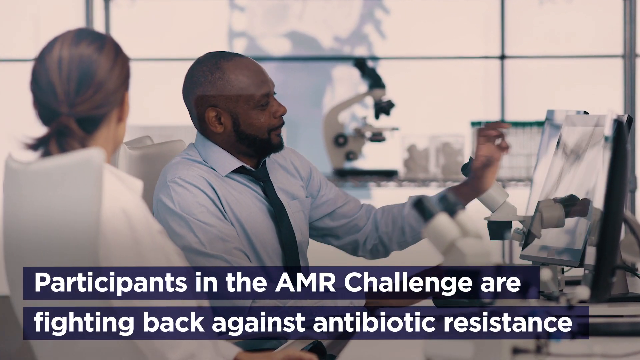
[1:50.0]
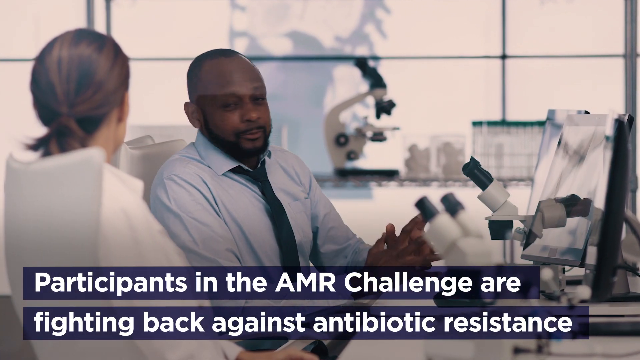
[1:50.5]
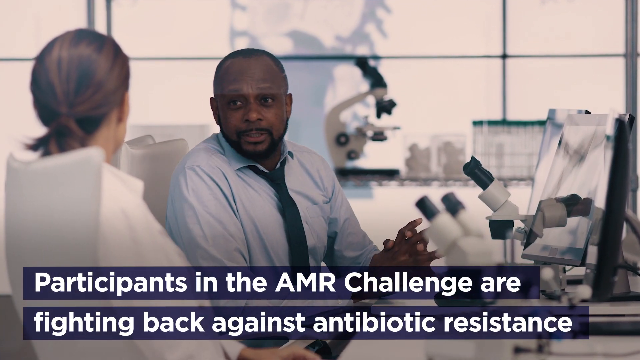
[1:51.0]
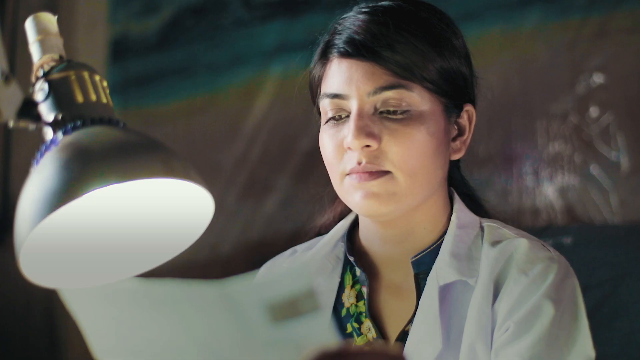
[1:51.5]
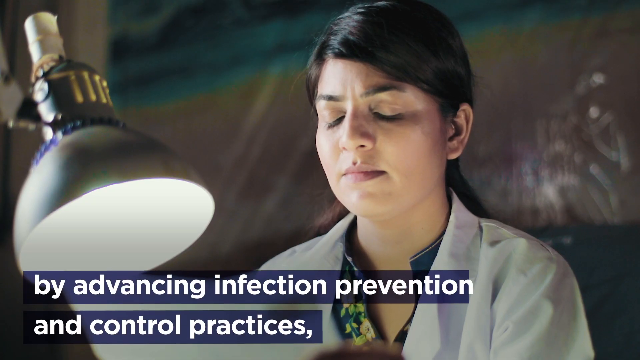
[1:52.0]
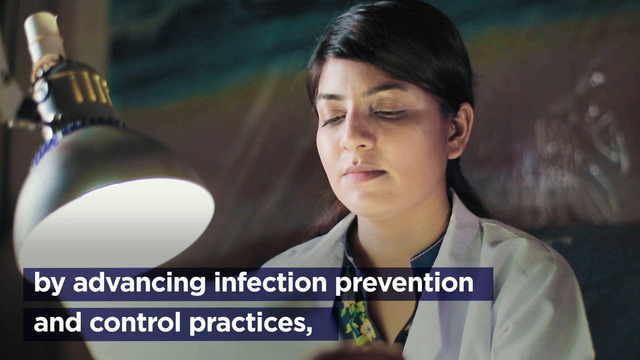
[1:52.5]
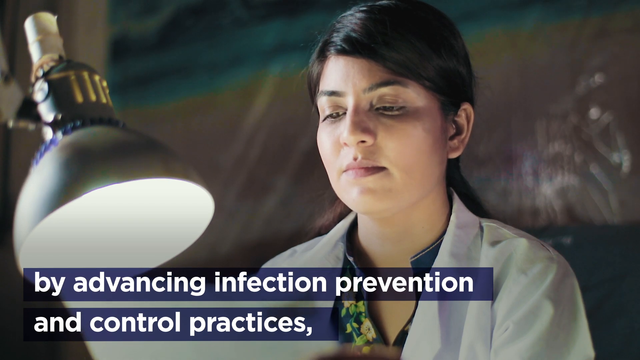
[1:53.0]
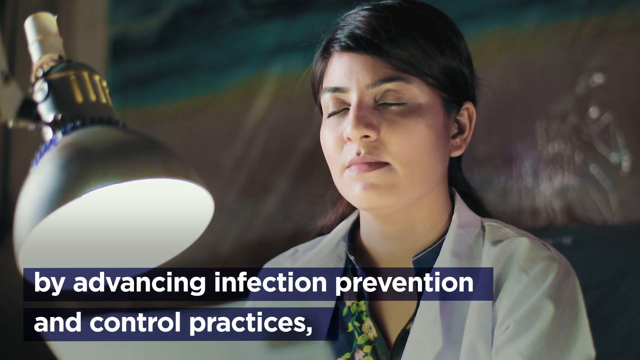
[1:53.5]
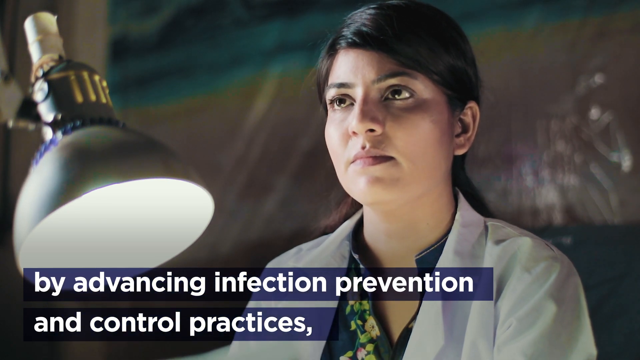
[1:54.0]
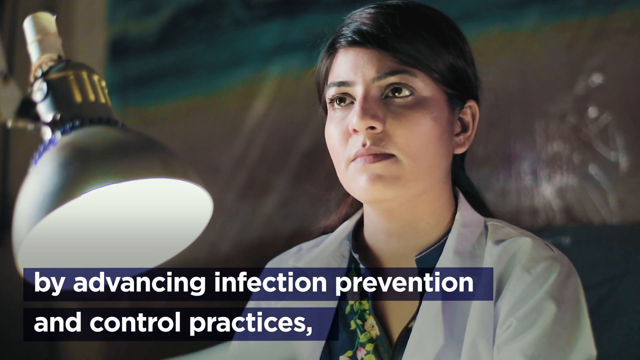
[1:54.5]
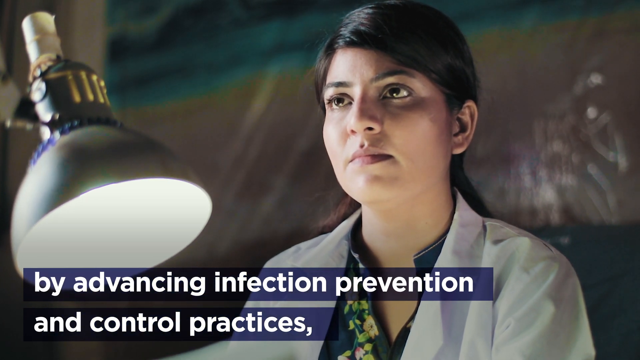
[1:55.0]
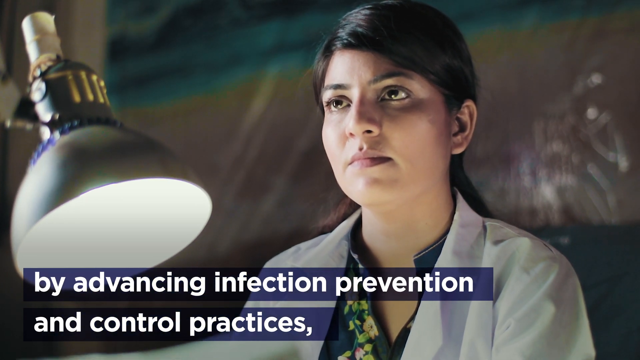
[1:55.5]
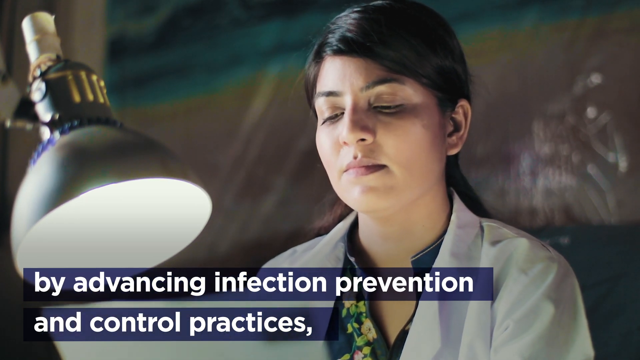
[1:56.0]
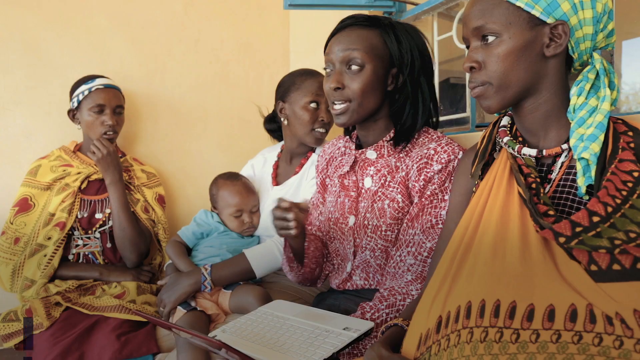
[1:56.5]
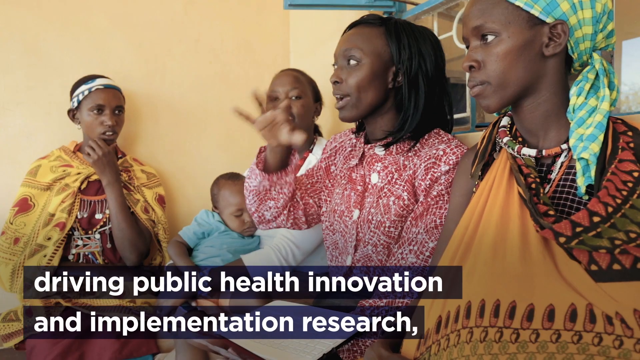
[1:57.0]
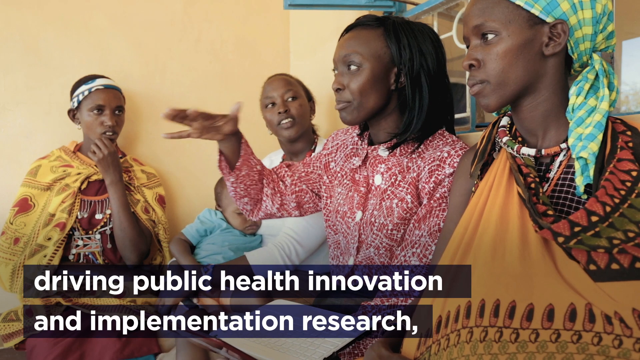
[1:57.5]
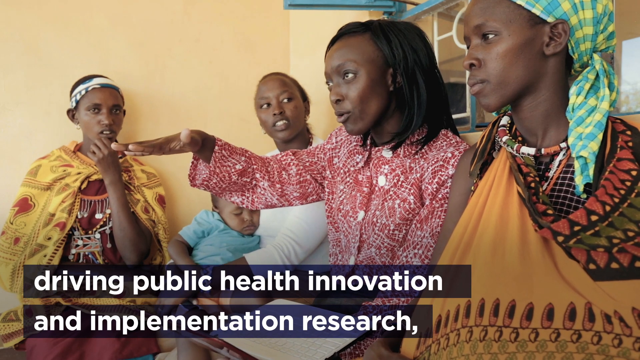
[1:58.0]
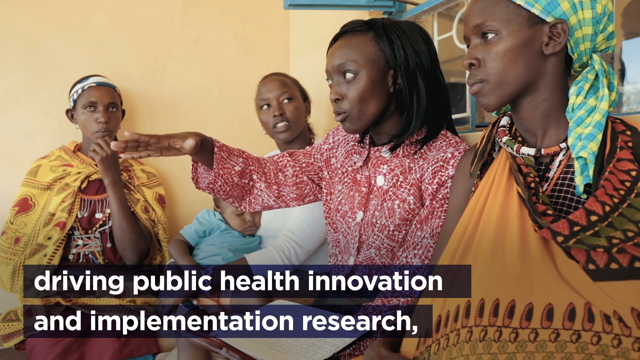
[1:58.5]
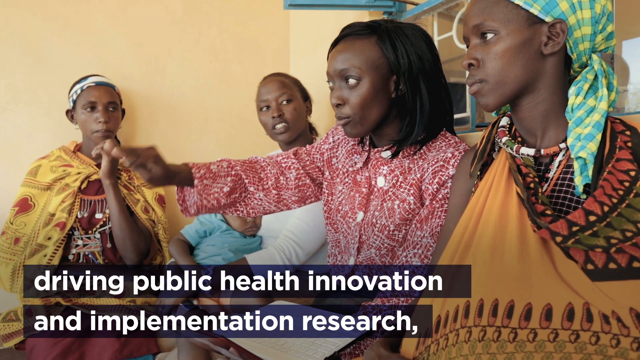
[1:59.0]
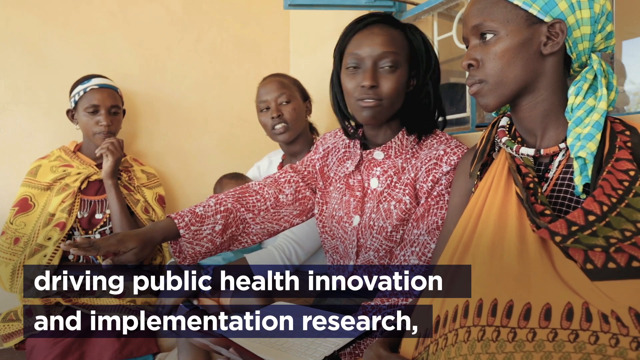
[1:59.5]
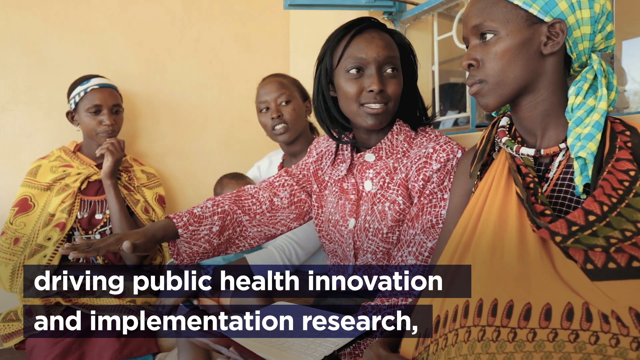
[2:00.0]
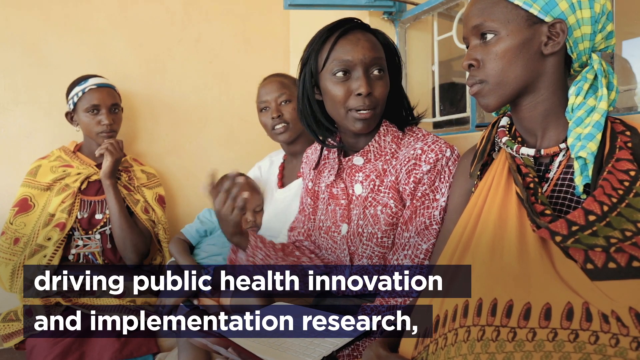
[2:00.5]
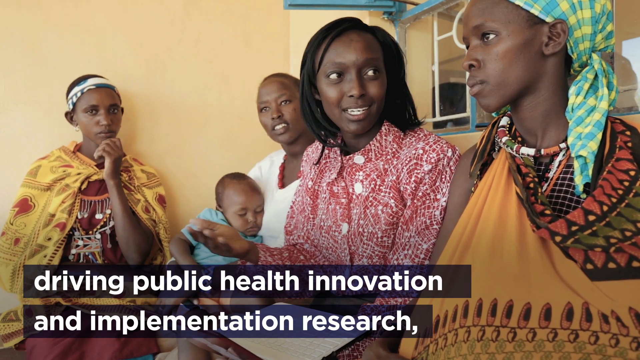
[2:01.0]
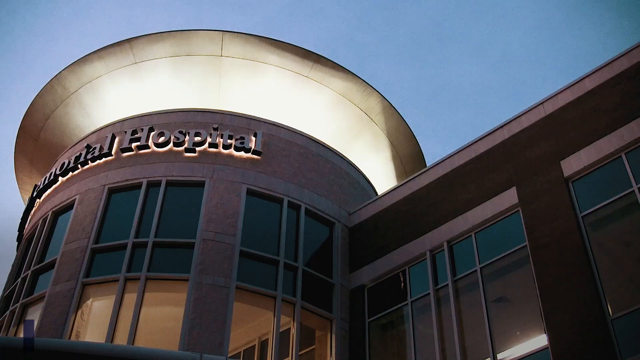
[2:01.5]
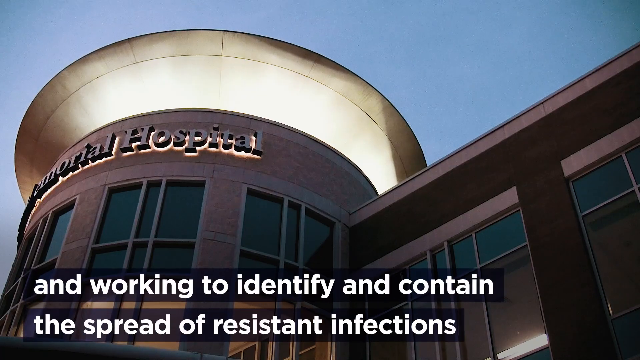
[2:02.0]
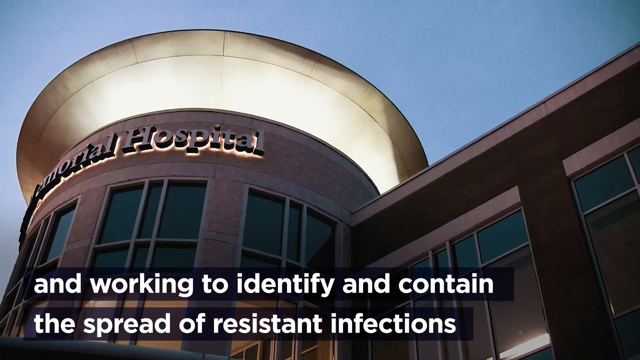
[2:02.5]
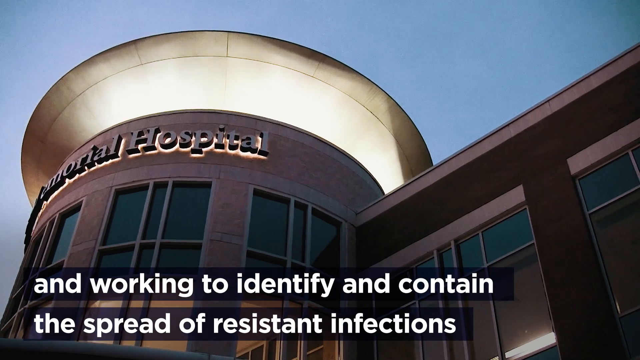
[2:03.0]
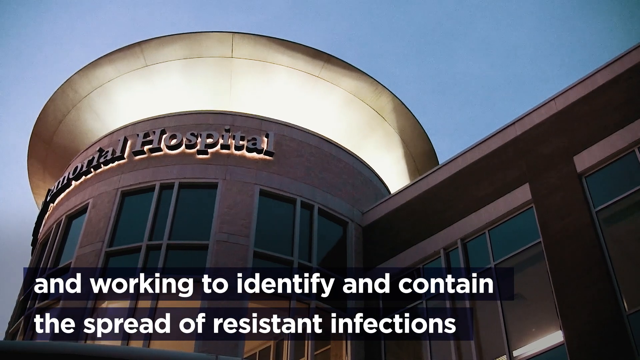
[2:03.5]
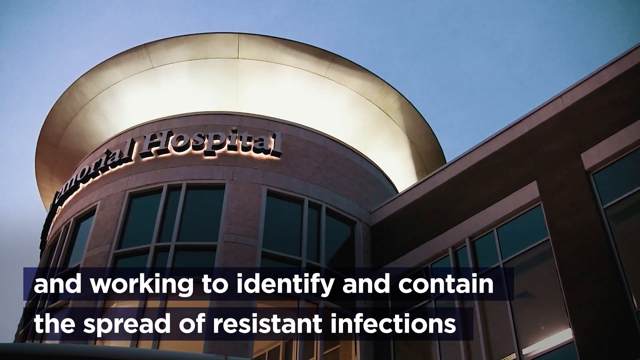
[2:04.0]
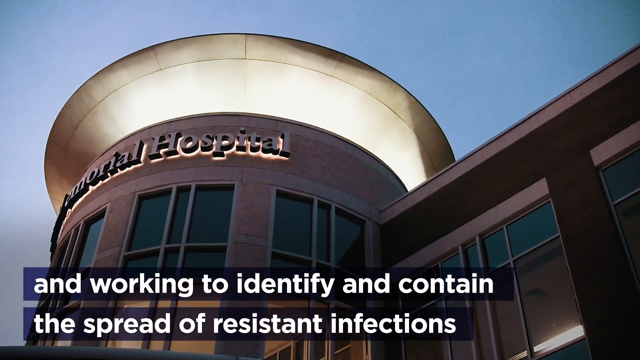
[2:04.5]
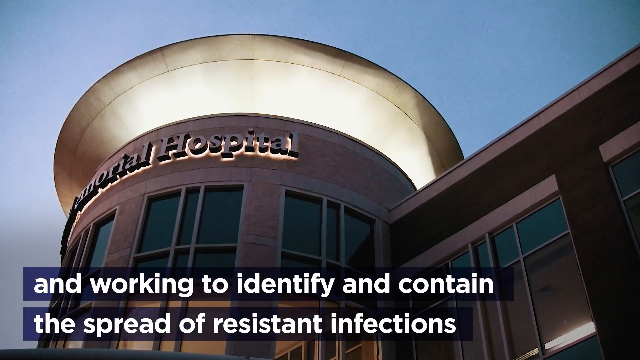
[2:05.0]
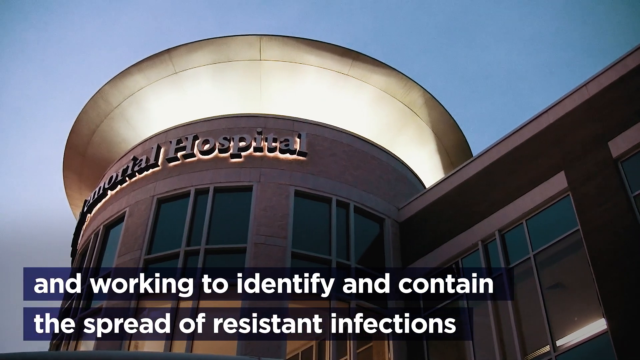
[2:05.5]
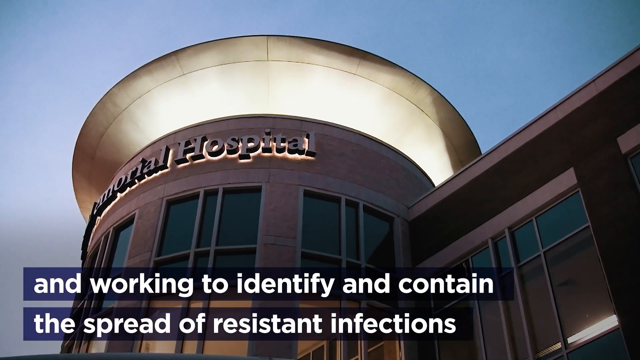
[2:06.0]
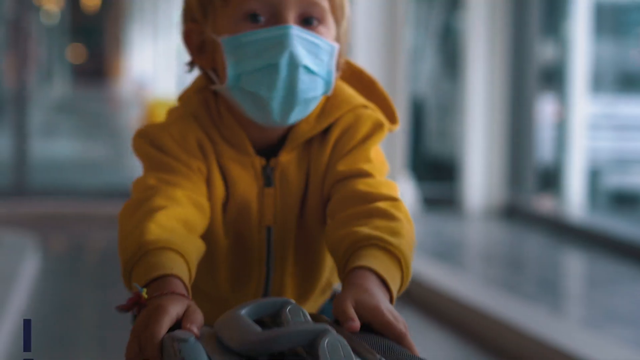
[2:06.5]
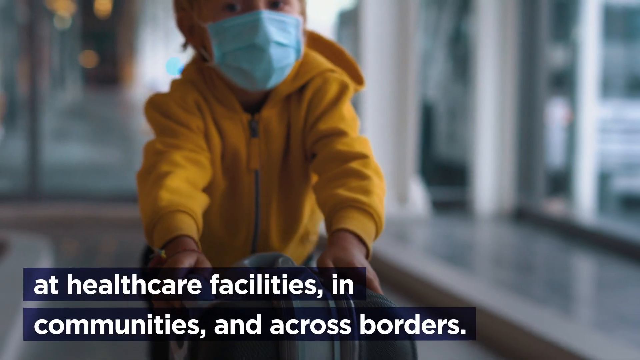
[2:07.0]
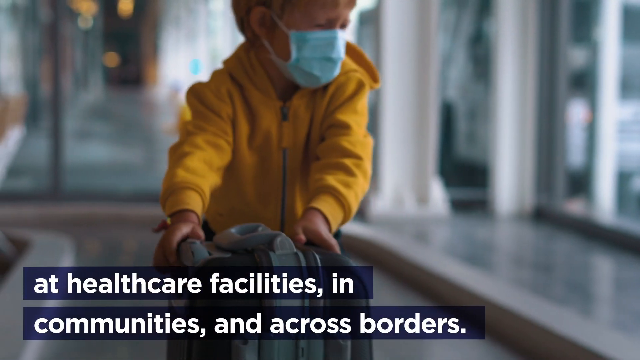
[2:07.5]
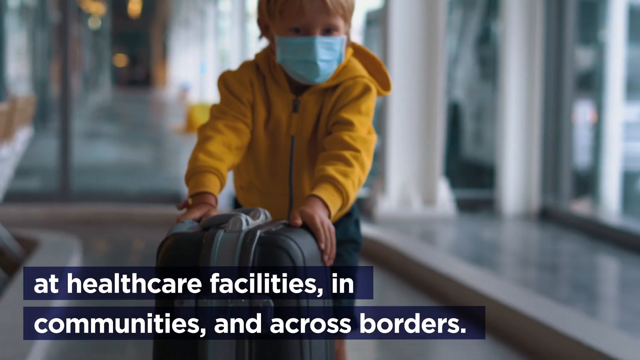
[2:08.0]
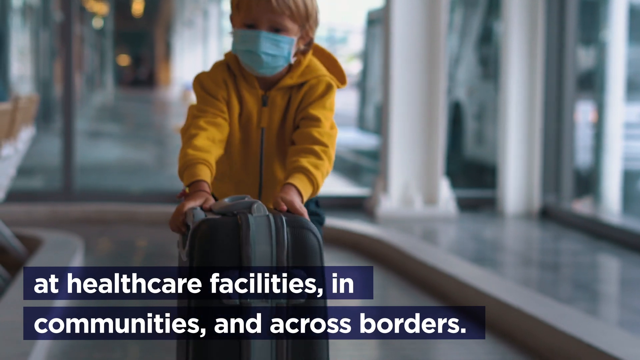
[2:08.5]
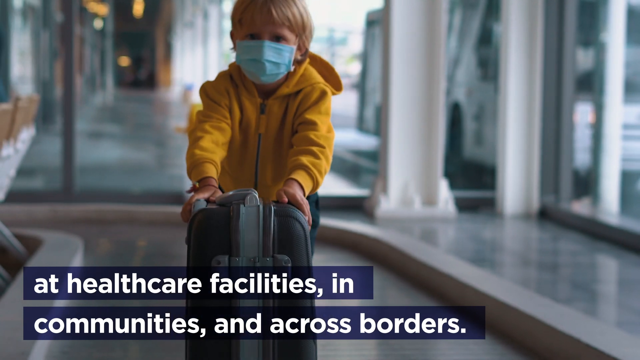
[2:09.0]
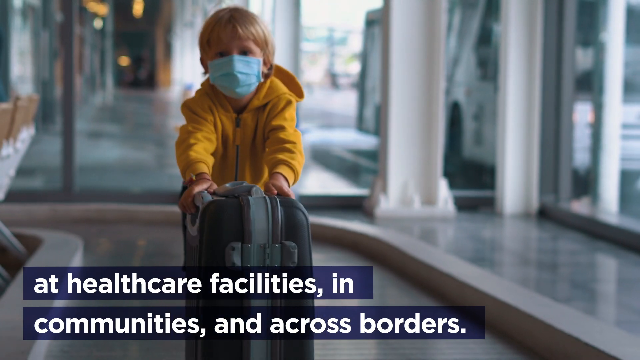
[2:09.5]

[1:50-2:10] A tan-skinned person who looks like she is wearing a doctor's coat stands over a large round light and keeps opening and closing her eyes. Next, four women who look like they are possibly from Africa sit outside a tan wall. The one on the far left has a white band around her head and very colorful African clothing in reds and oranges; the second is in white and holds a little sleeping baby dressed in light blue; the third, in red and white, is the one talking; and the fourth is in orange, with a blue and yellow headband on her head and a beaded necklace. The scene then goes to the outside of a hospital with a round pillar-like area and a lit-up rim around it. Finally, a little baby wearing a hospital mask and a yellow jacket plays with a suitcase, rolling it around.